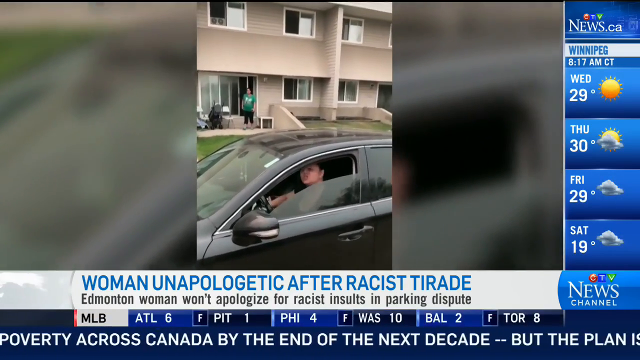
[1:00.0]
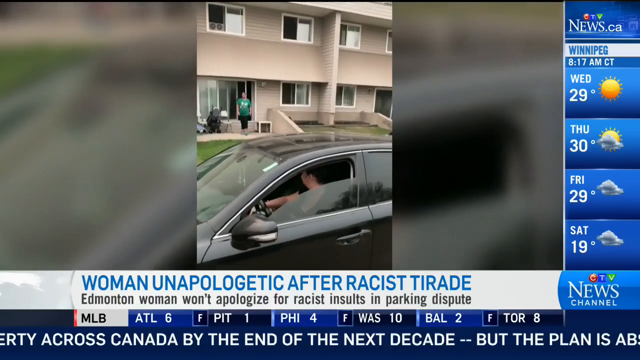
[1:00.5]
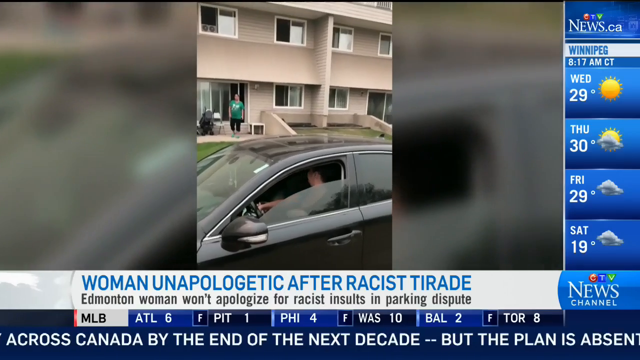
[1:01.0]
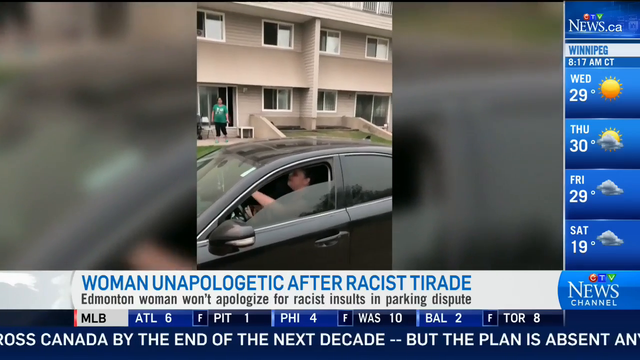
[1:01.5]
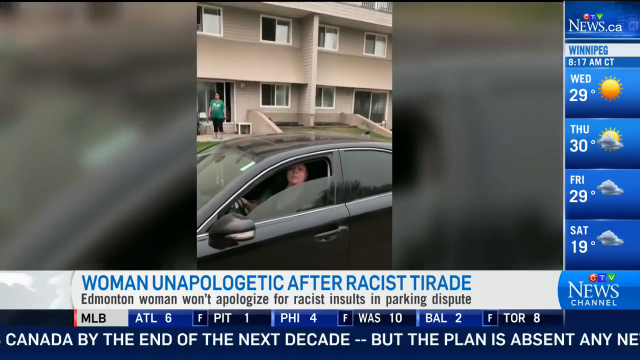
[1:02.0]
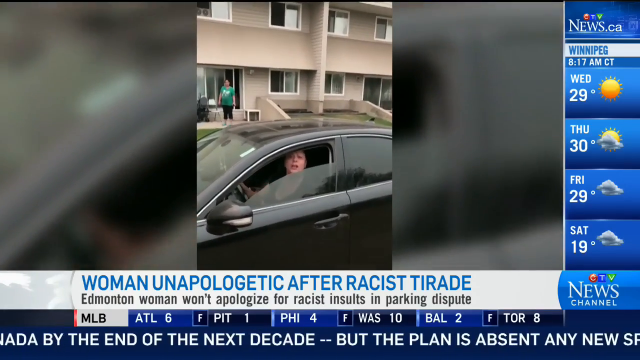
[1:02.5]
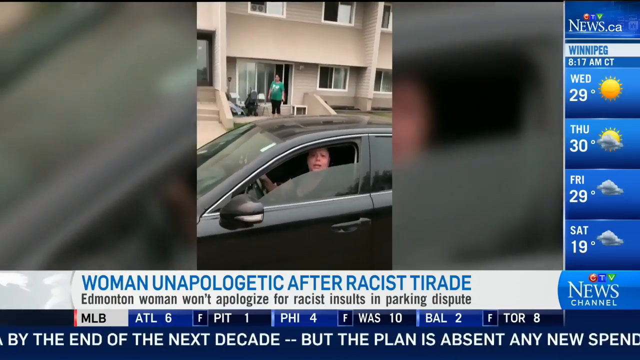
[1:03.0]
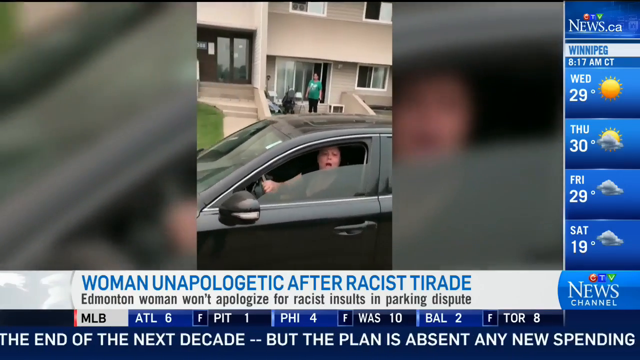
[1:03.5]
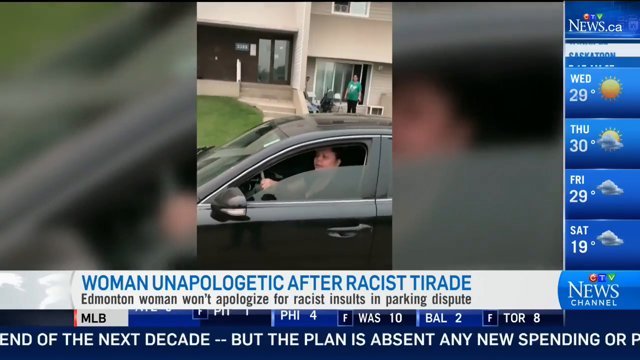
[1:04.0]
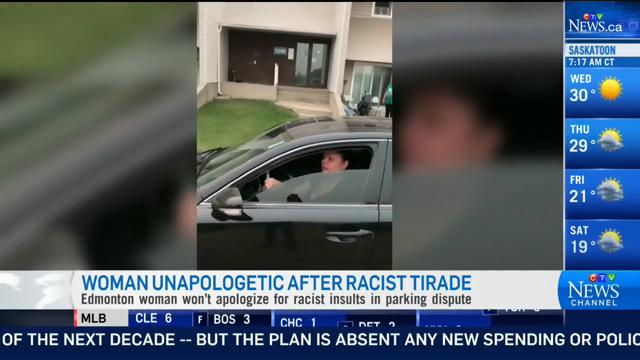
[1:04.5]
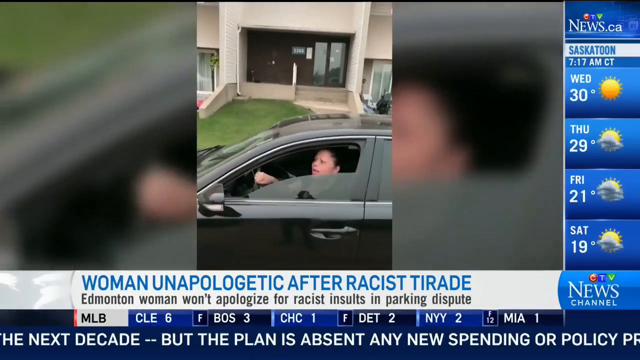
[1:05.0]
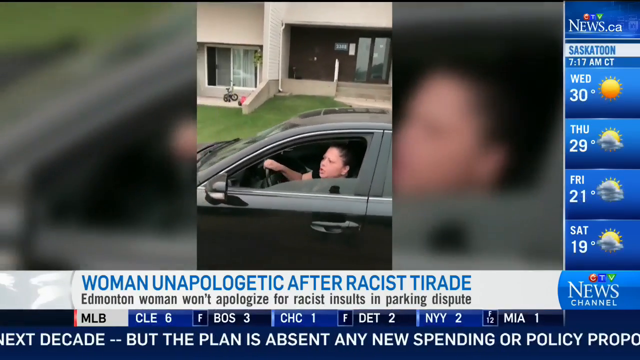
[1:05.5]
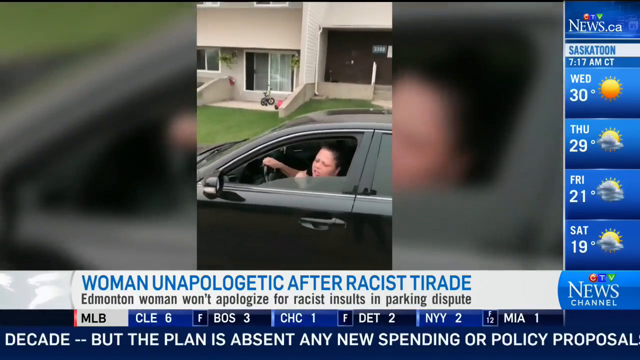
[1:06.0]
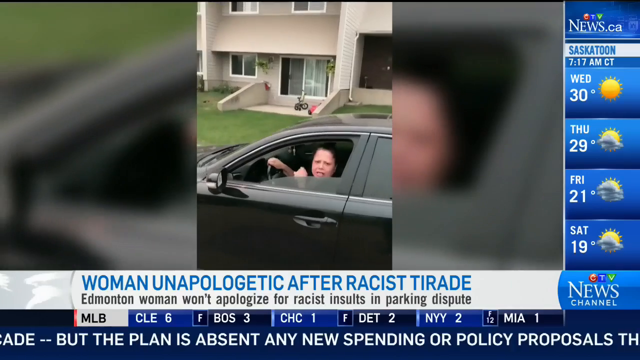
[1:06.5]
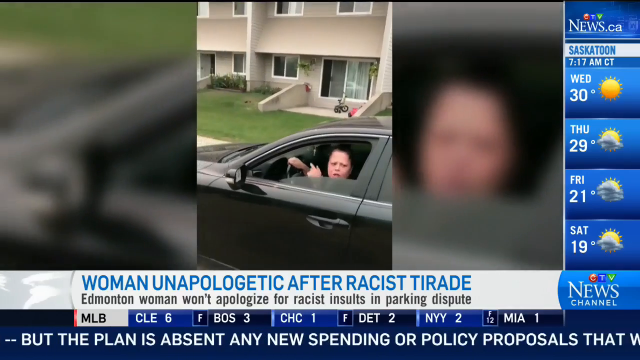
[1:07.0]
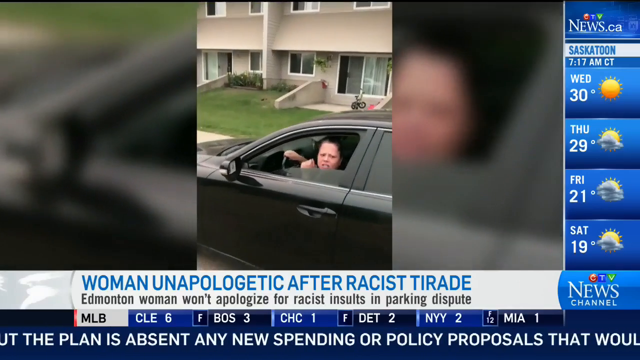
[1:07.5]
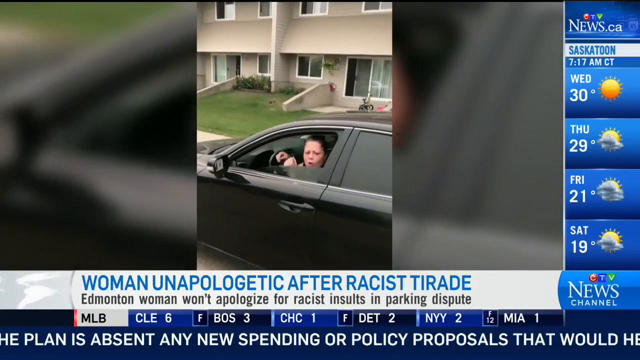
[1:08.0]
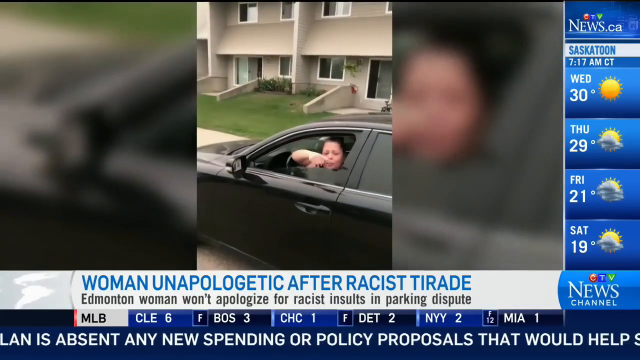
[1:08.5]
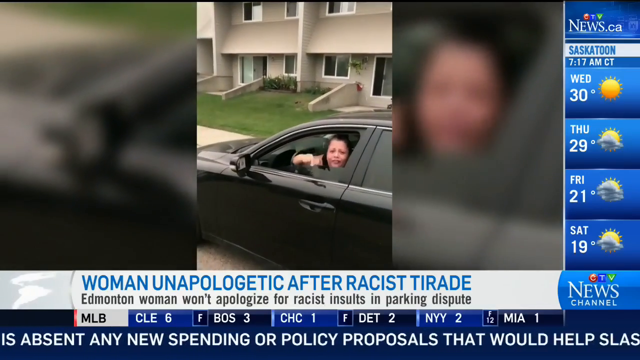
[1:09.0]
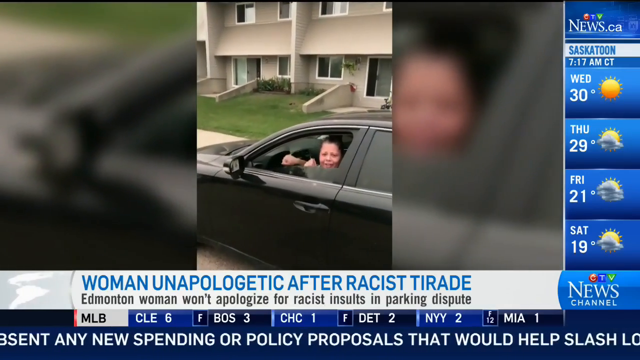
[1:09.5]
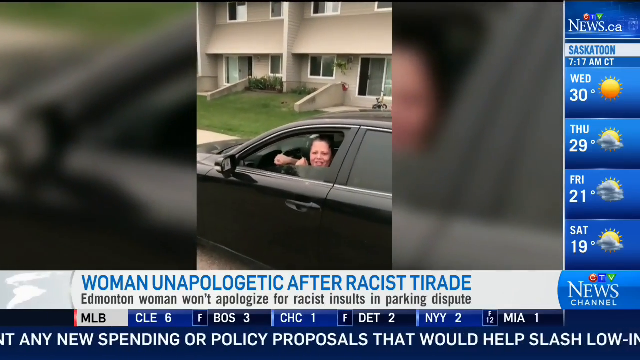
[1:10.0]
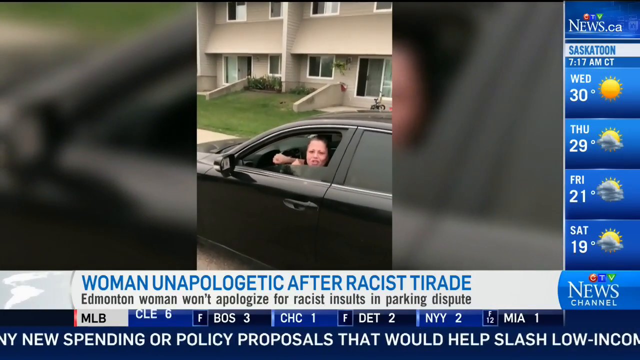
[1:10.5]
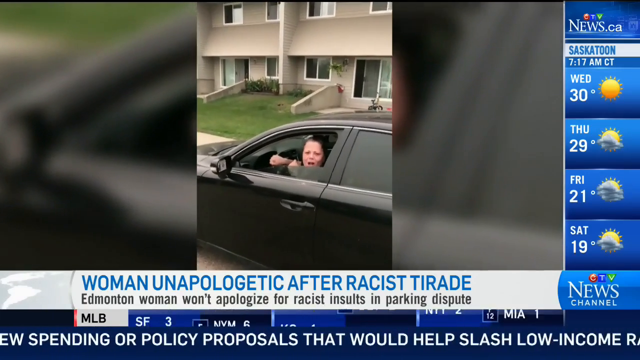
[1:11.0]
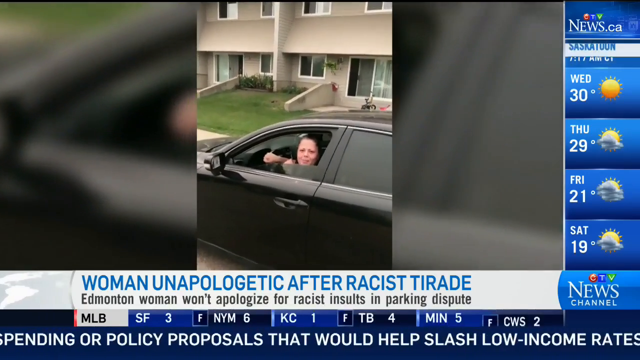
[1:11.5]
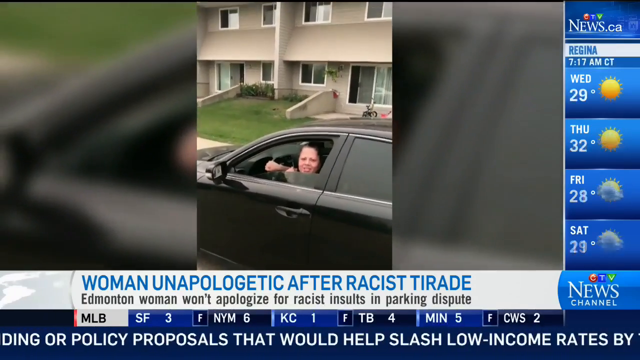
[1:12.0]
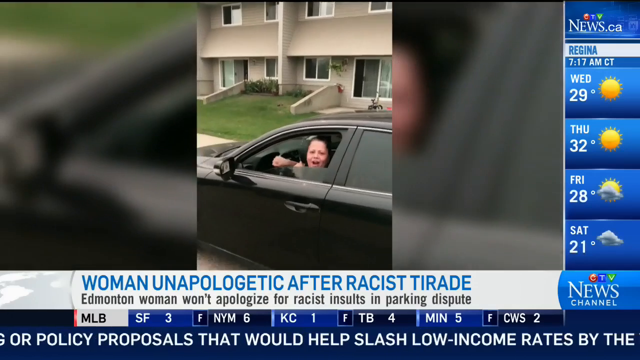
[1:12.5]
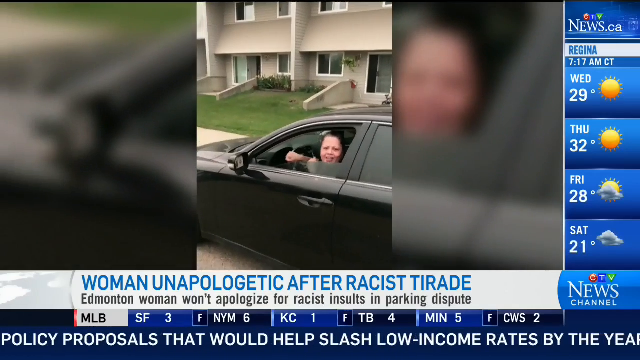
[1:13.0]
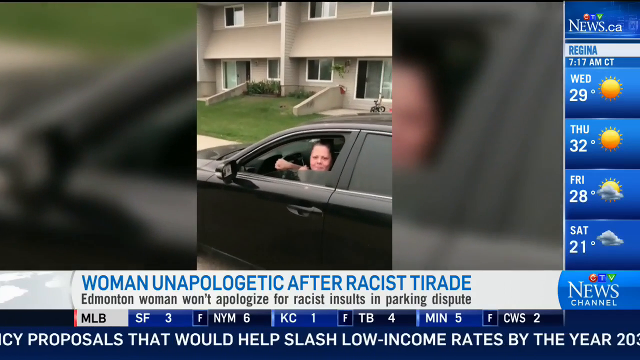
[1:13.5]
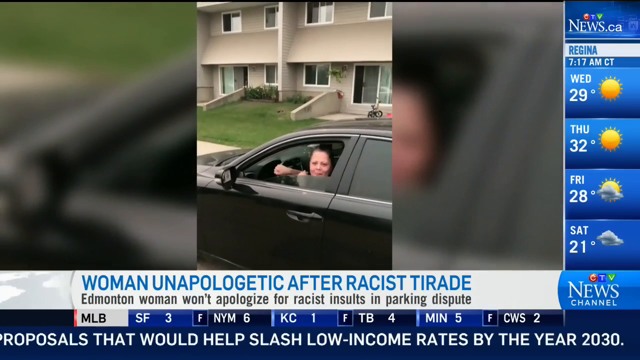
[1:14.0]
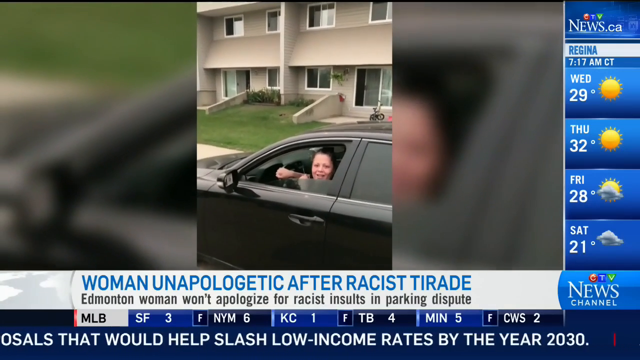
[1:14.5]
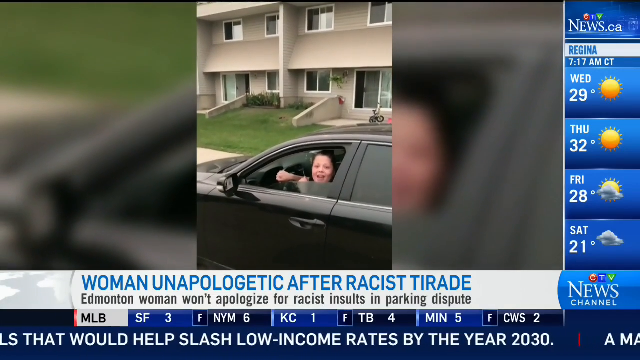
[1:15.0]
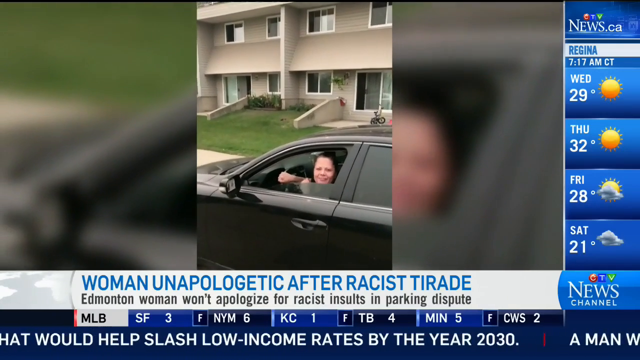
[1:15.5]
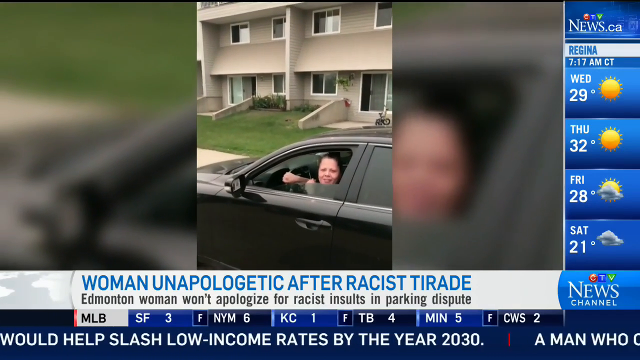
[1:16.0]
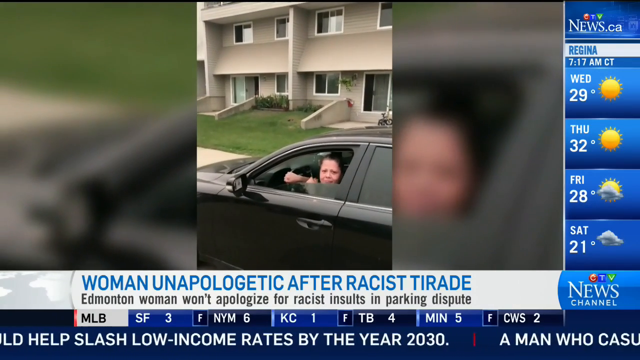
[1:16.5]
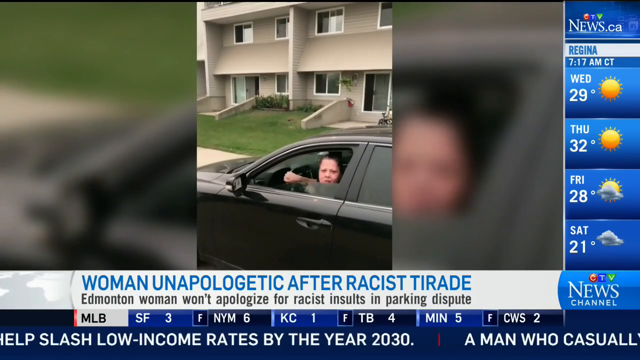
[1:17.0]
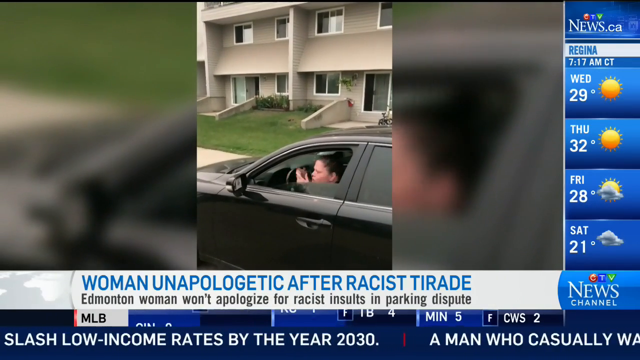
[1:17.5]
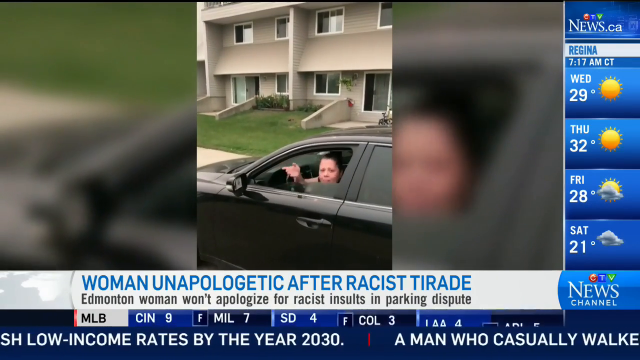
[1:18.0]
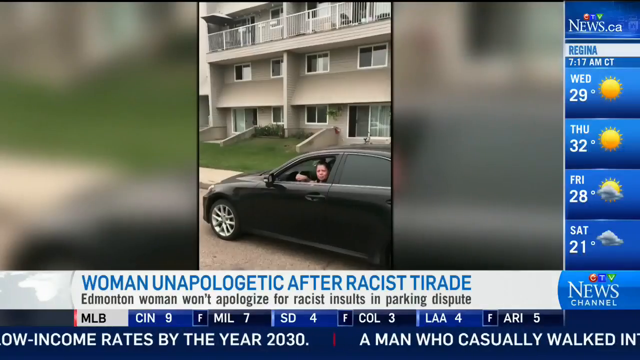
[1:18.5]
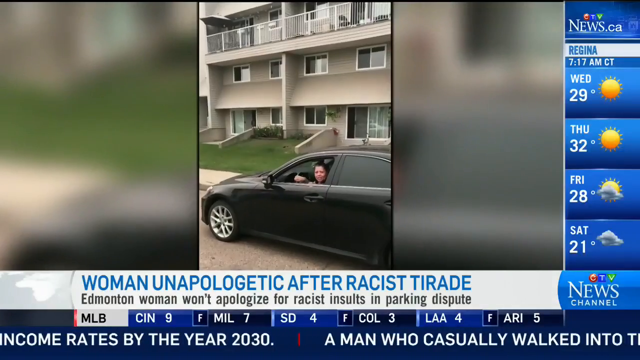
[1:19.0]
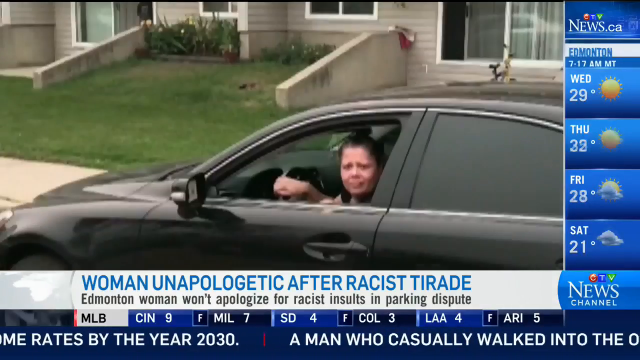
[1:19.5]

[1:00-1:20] The phone-view video of the woman continues; she seems startled and angry and may be the unapologetic woman from the dispute. A person wearing green, apparently a woman, is in the background, possibly a witness. There are buildings that look like apartments. The woman grows angry and points; she has a black car whose rear windows look somewhat dark, possibly tinted. Information is shown at the bottom of the screen, some apparently about the MLB and some about interests. The camera stays focused on the woman. In the background there is a small bicycle that looks like it belongs to a child, near what appears to be a glass panel door.